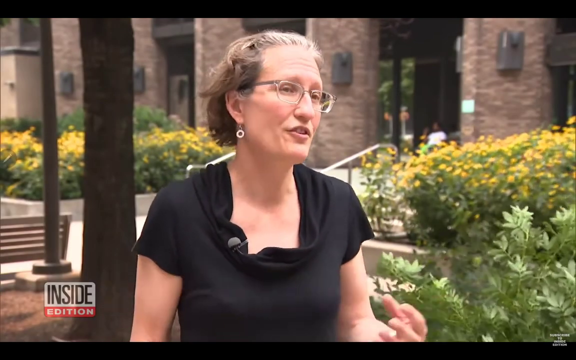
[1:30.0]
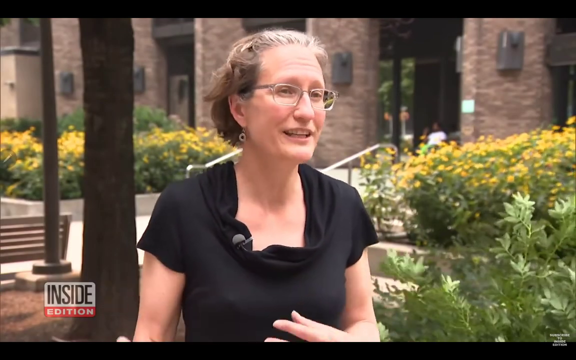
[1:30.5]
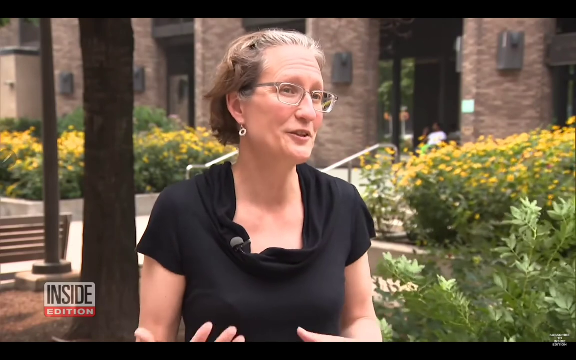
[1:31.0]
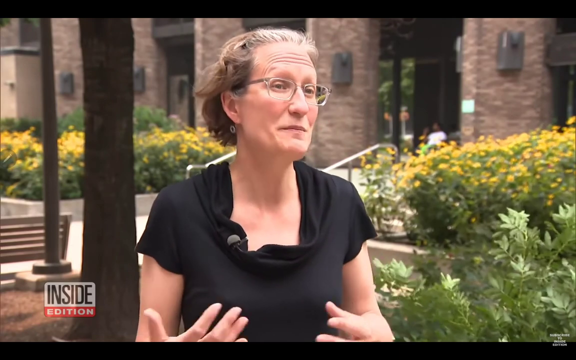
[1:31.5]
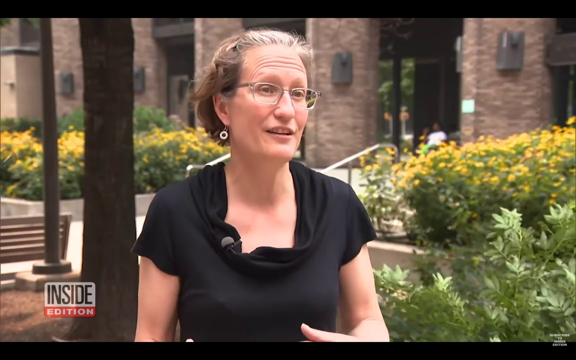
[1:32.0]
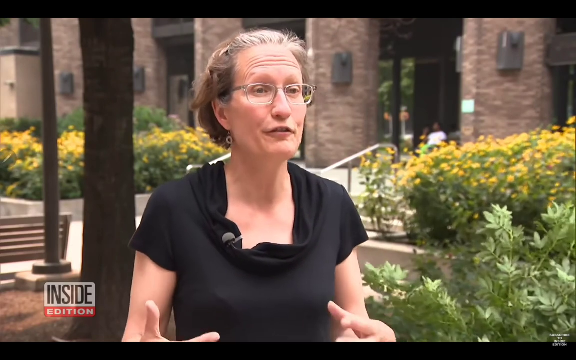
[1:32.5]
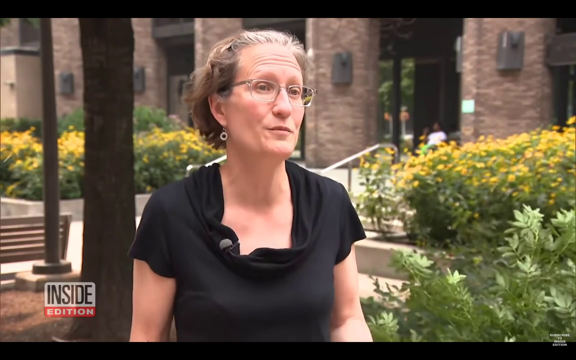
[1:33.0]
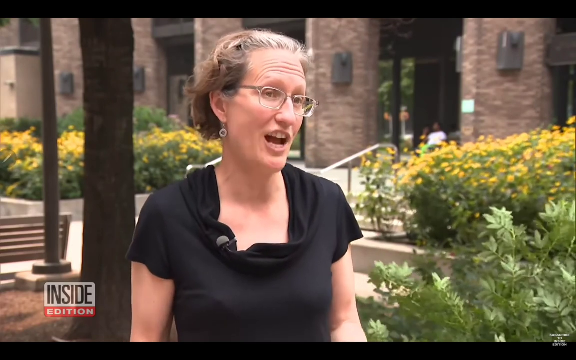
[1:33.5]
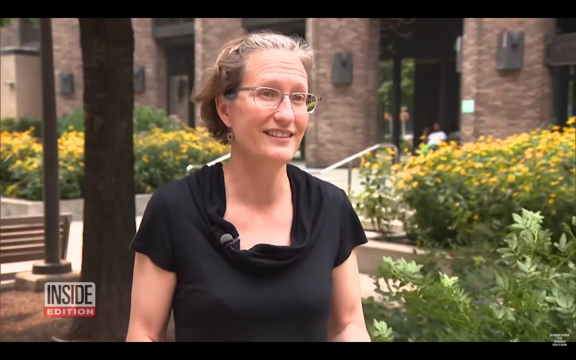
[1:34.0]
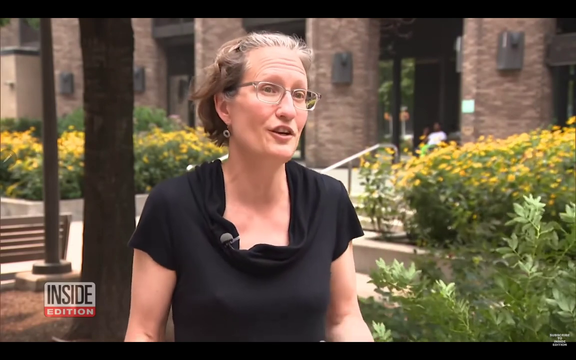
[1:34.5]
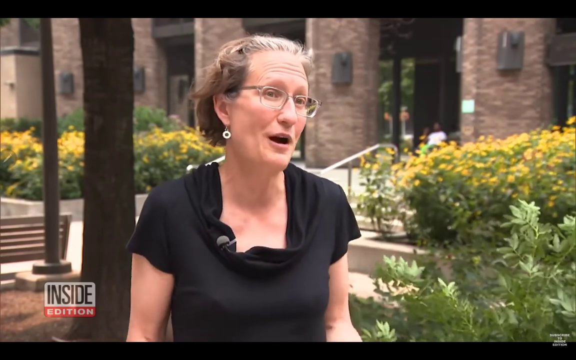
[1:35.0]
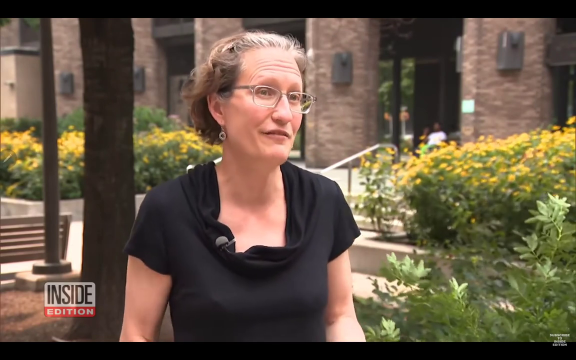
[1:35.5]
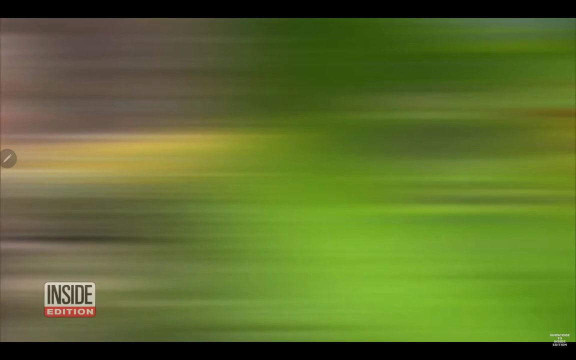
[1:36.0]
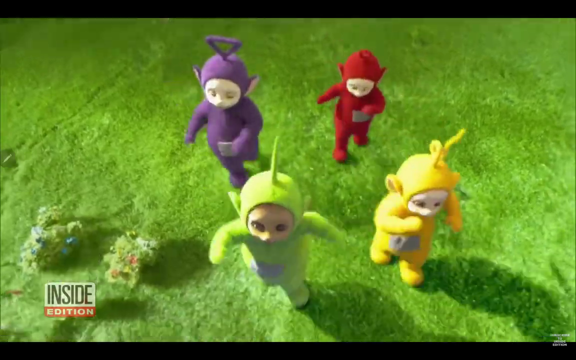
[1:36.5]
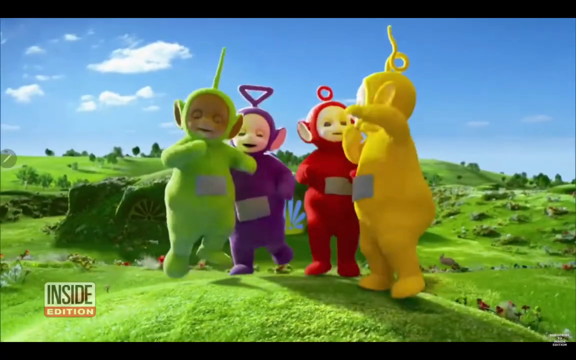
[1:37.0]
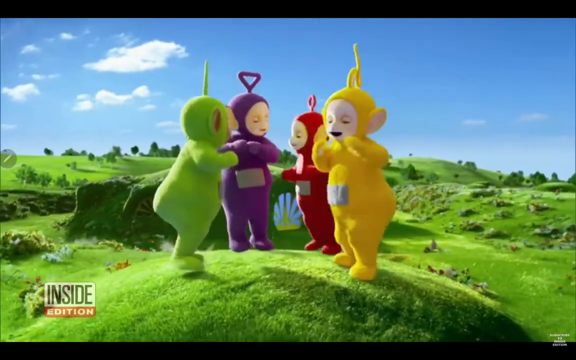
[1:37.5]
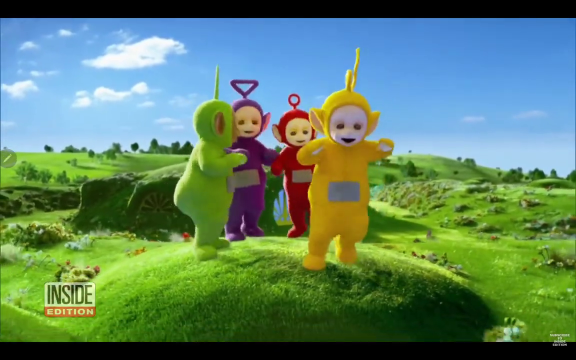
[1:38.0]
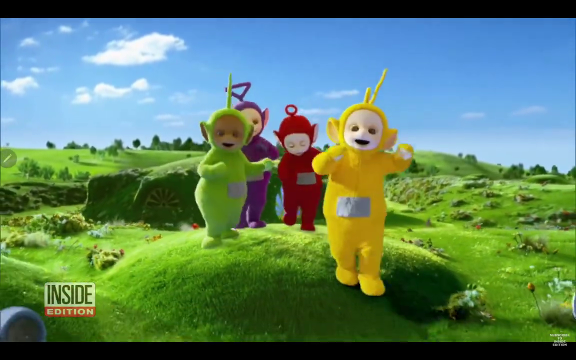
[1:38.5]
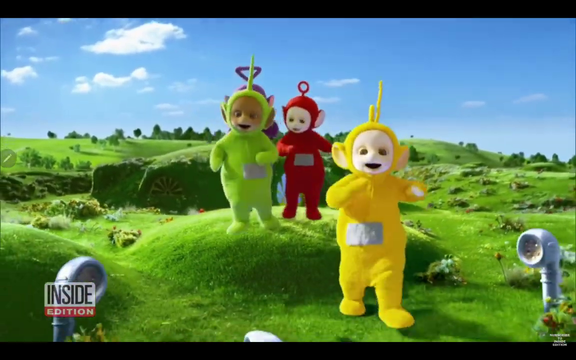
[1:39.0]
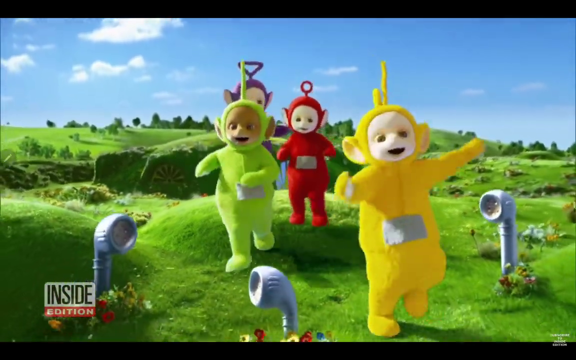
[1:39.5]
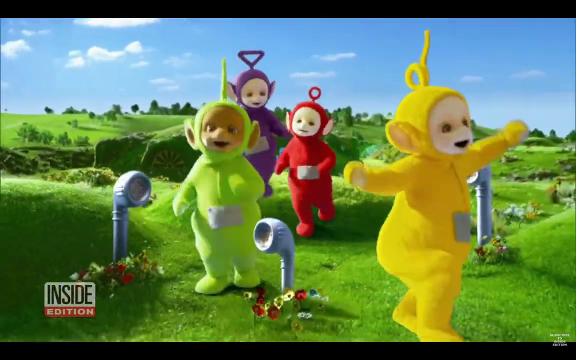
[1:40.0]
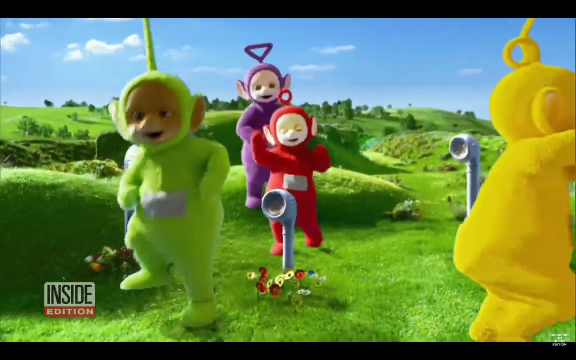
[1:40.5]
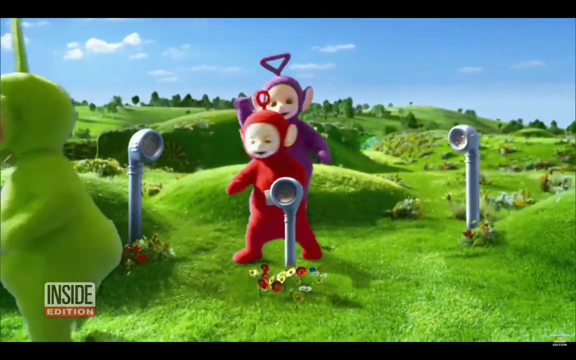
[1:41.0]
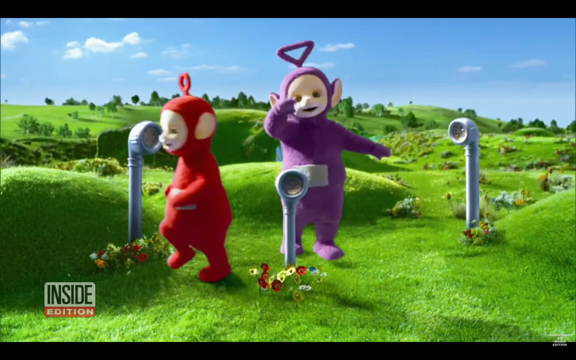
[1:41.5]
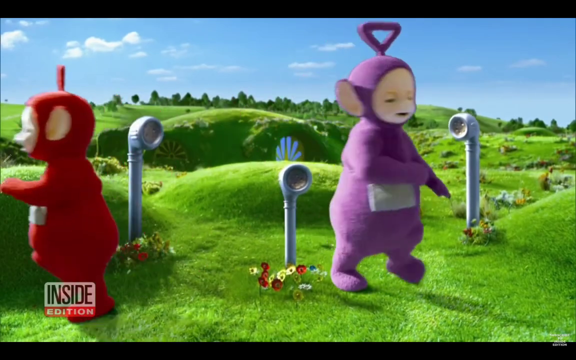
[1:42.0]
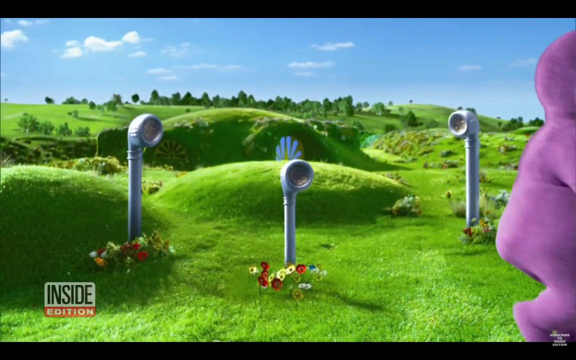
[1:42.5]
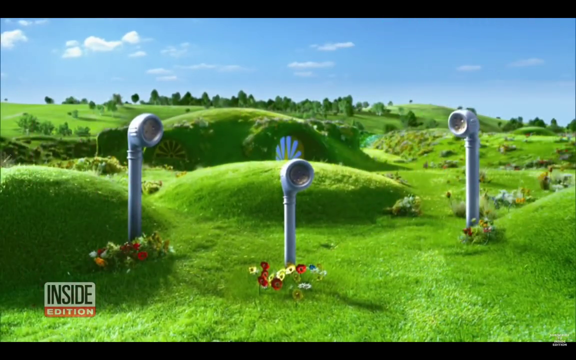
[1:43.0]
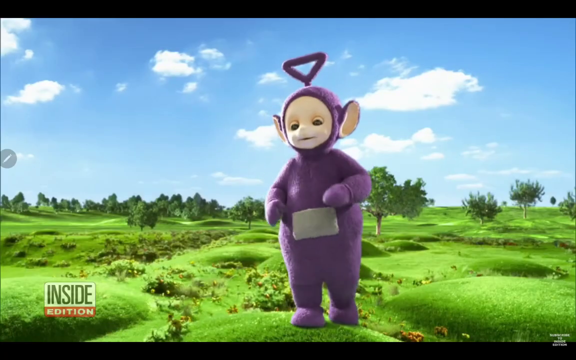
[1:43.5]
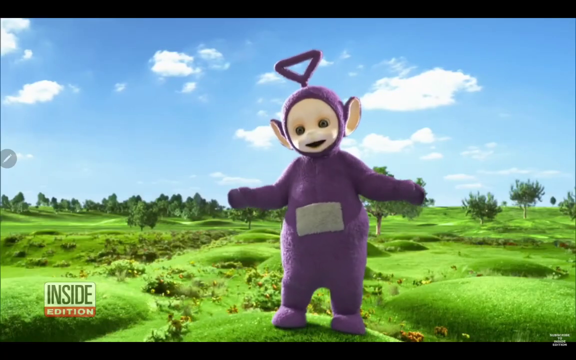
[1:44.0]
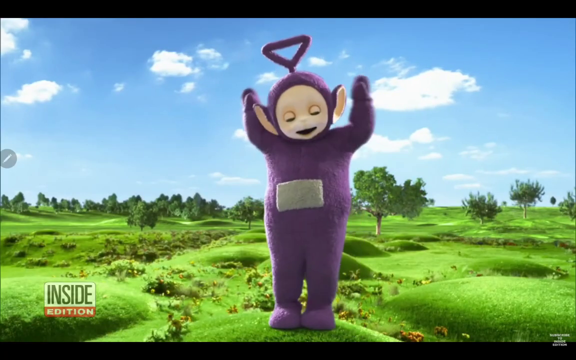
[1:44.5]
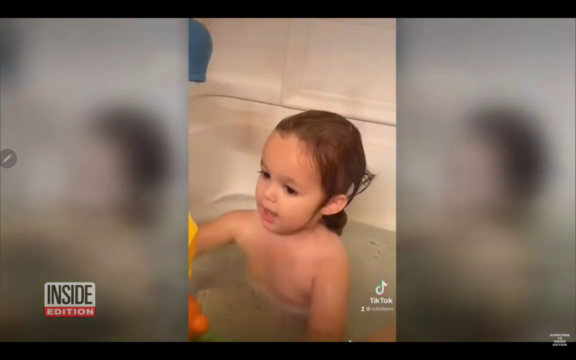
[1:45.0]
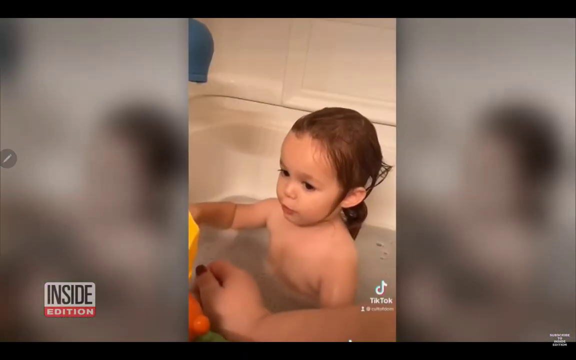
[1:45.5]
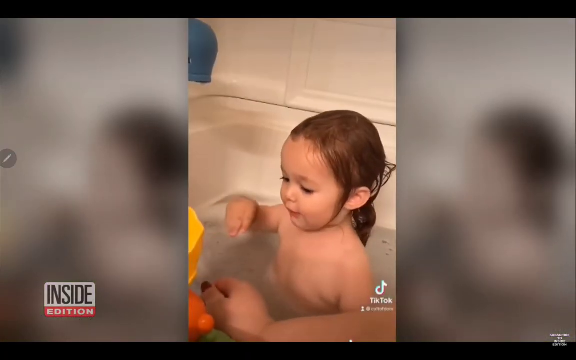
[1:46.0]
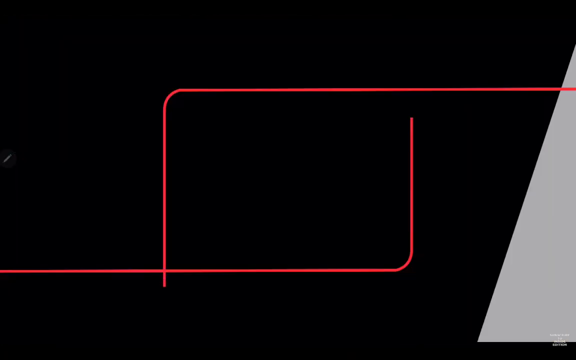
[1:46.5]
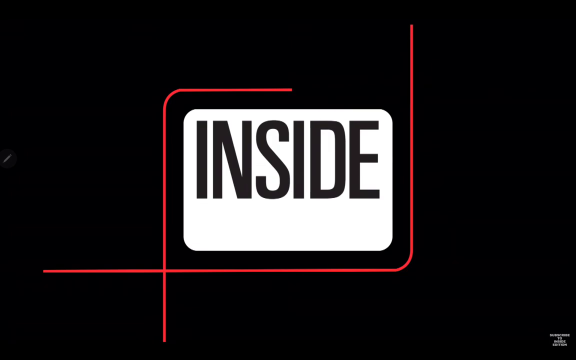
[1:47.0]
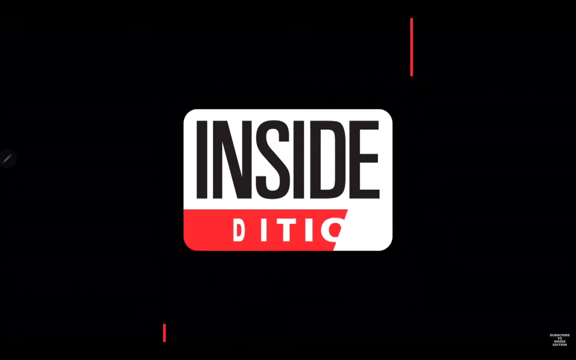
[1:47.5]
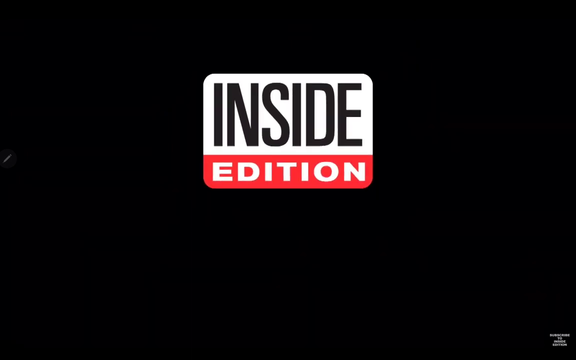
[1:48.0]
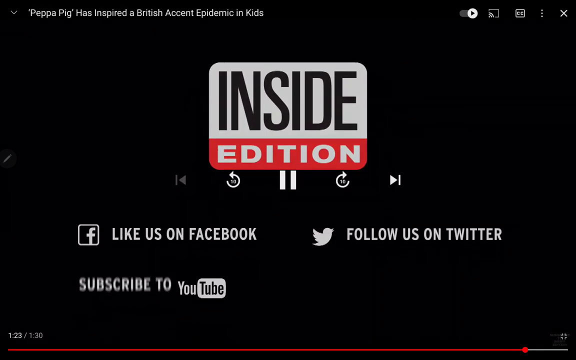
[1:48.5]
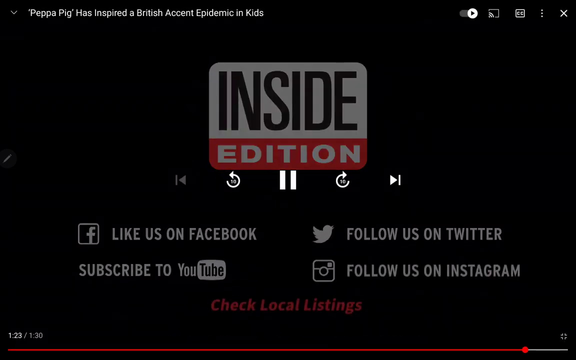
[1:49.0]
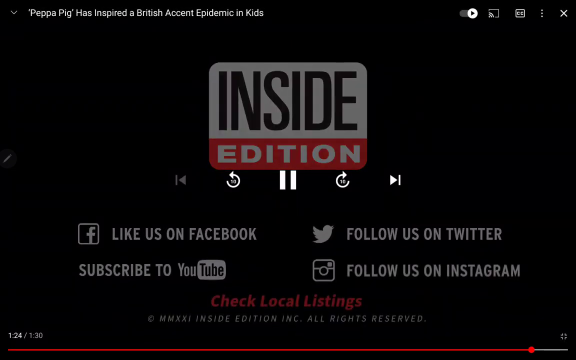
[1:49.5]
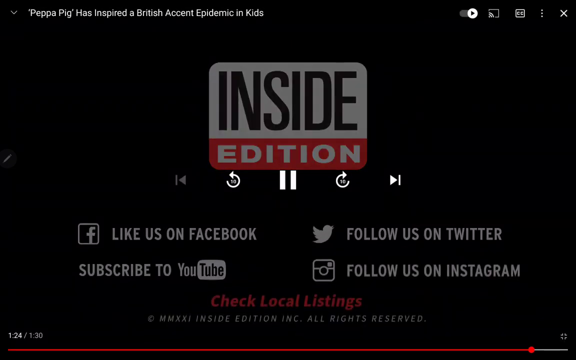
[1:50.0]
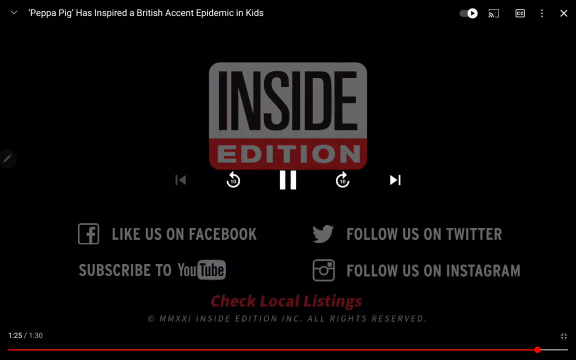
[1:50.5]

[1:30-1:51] The Inside Edition logo is on the bottom left as the professor speaks. She wears a black blouse and glasses and stands in front of what looks to be NYU. A clip from Teletubbies follows, with the characters running out in a field, and then the little girl appears in her bathtub, taking a bath. The video ends on the Inside Edition logo against a black screen: the top part of the rectangle is white with "inside" written in black, and the bottom portion is red with "edition" written in white. Beneath it the screen says "like us on Facebook" and, underneath that, "subscribe to YouTube"; to the top right it says "follow us on Twitter", and at the bottom "follow us on Instagram". It also says "check your local listings for the time".